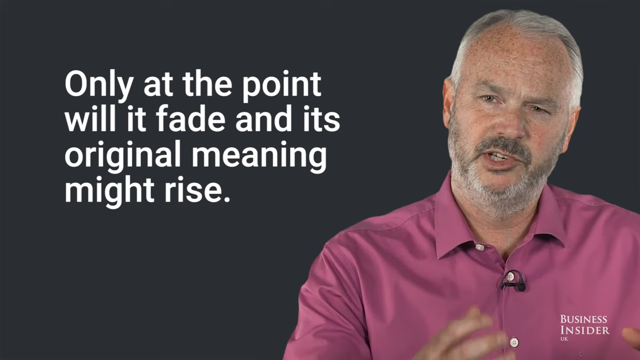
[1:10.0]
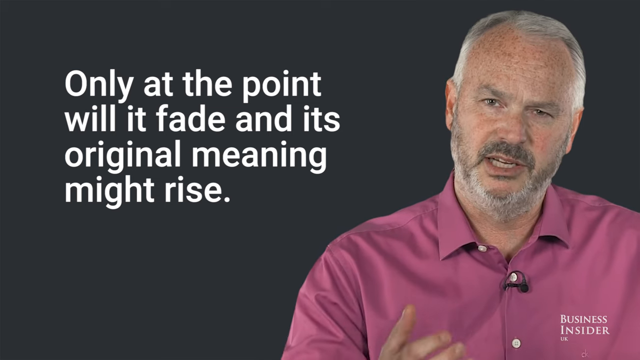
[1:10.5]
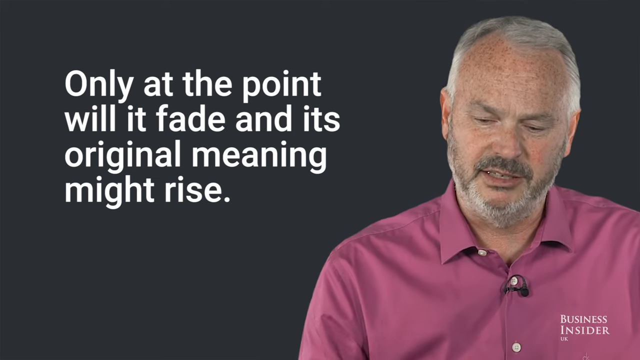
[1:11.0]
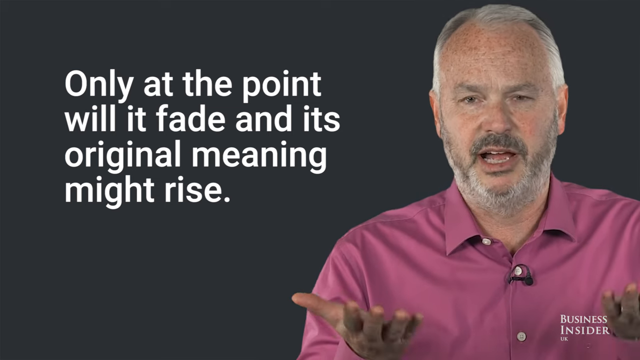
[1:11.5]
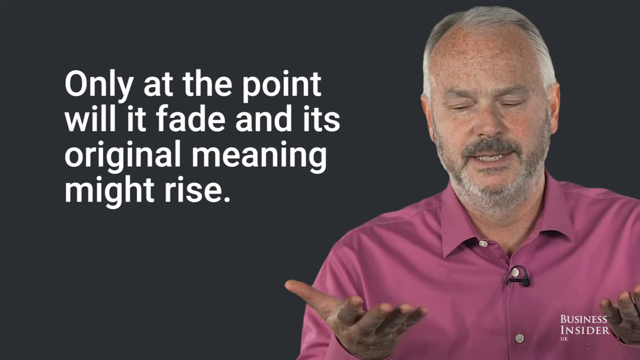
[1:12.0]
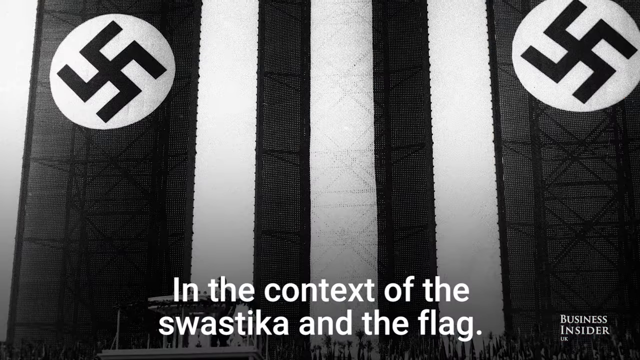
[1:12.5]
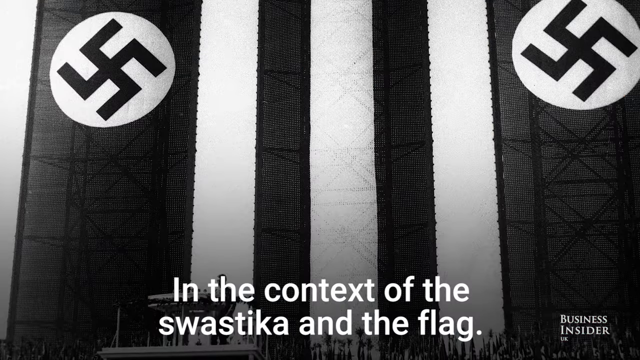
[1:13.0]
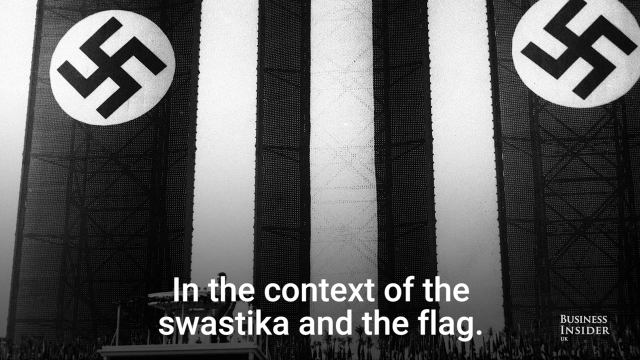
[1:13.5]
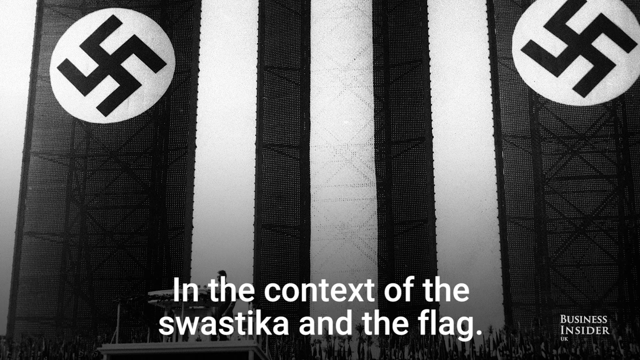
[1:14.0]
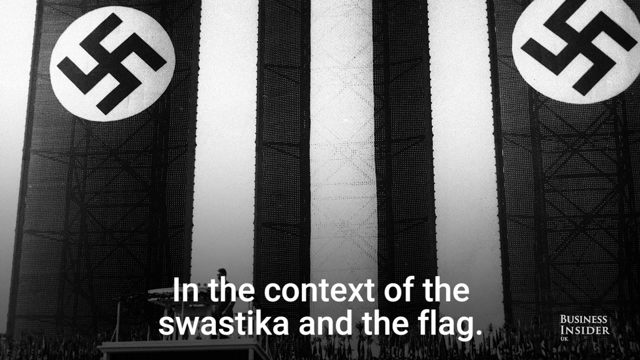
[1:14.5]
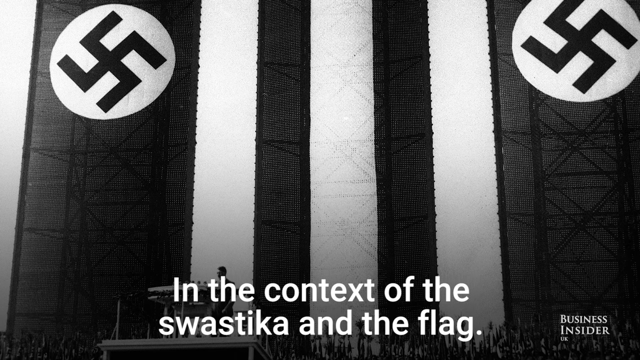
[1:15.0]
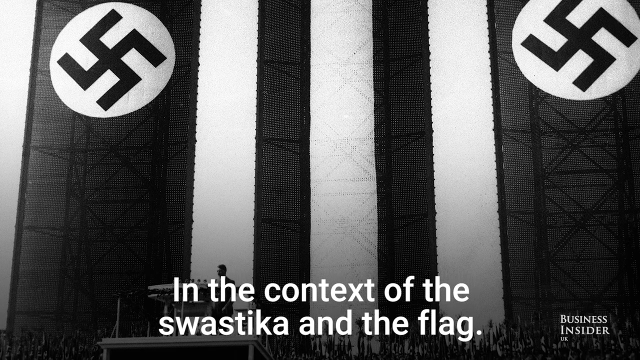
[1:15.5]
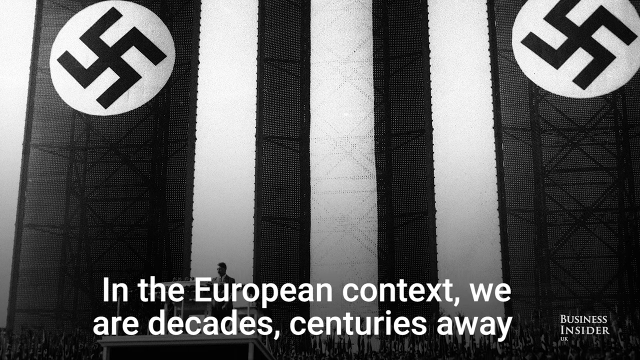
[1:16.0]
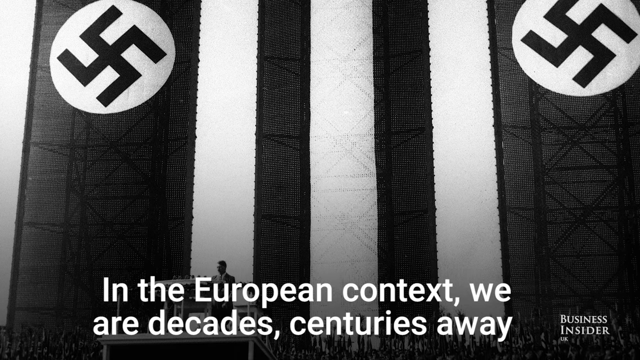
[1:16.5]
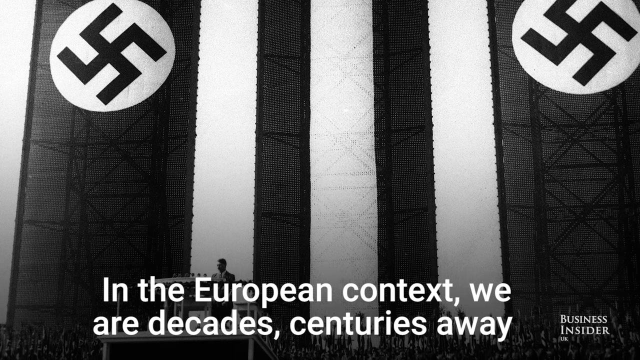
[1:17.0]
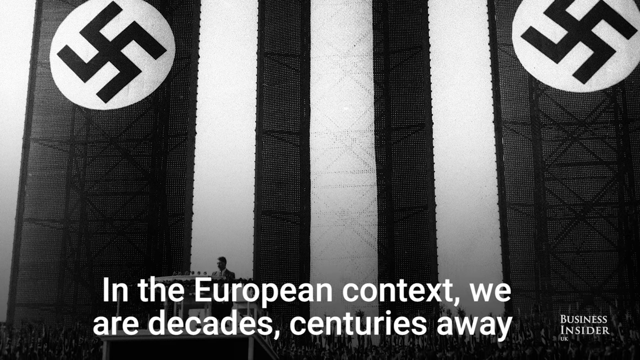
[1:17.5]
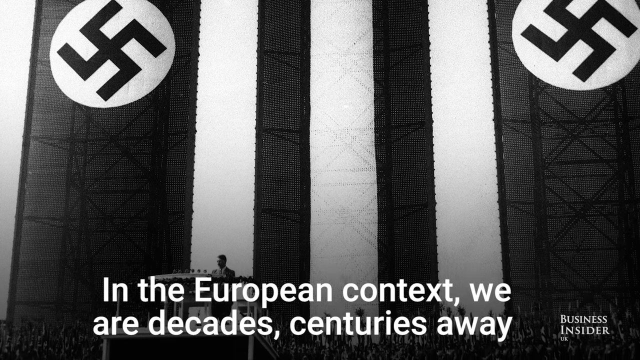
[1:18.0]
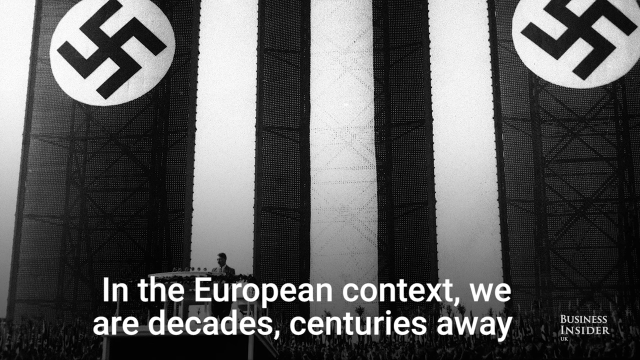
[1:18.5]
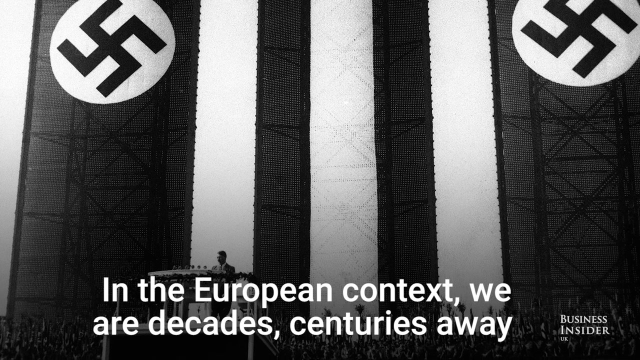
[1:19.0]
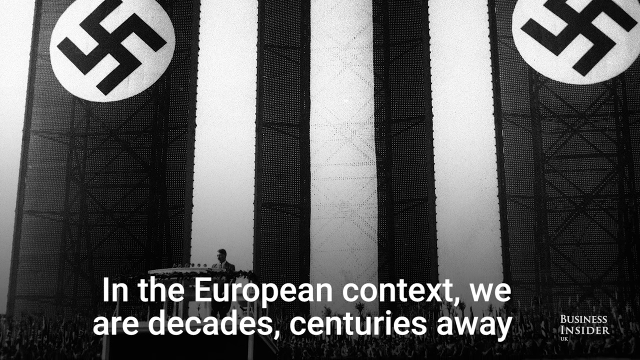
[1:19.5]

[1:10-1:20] Various photos show the swastika in the past, from the time of Hitler ruling the Nazi German party.